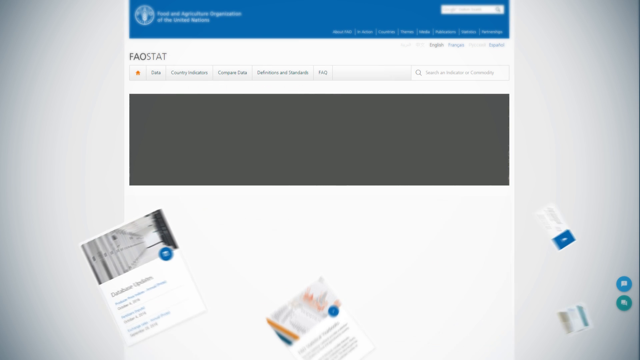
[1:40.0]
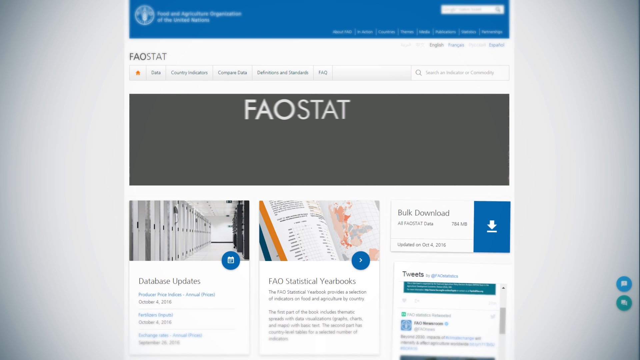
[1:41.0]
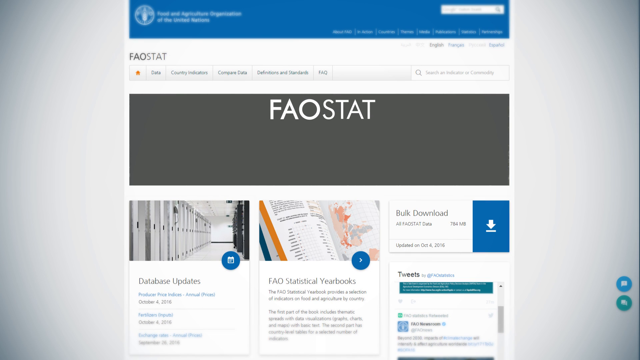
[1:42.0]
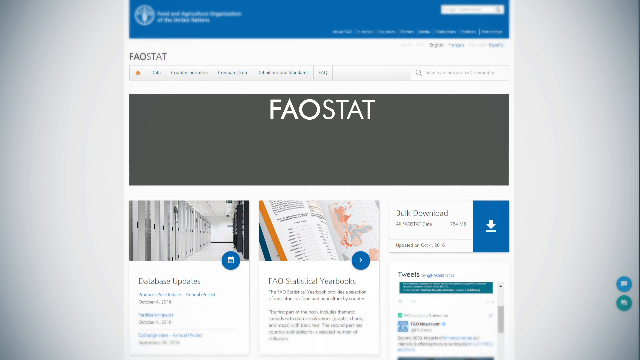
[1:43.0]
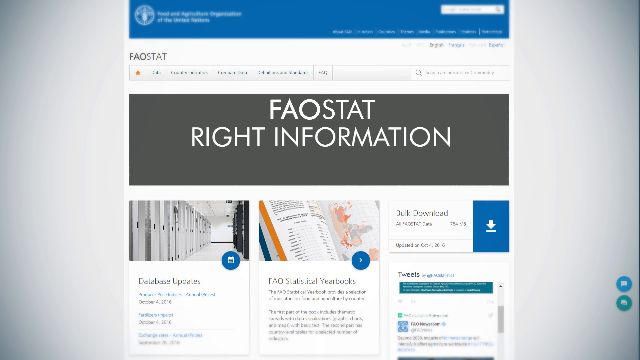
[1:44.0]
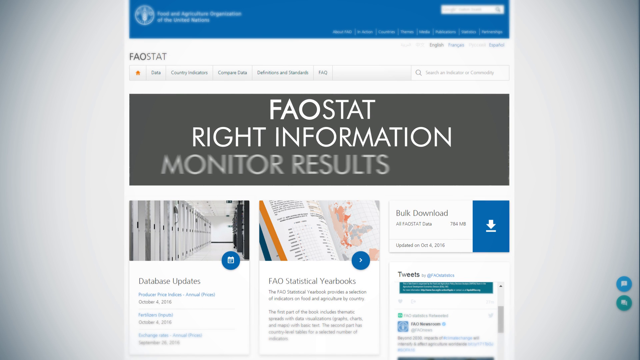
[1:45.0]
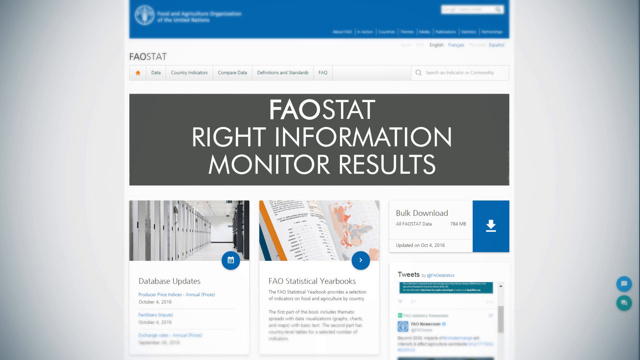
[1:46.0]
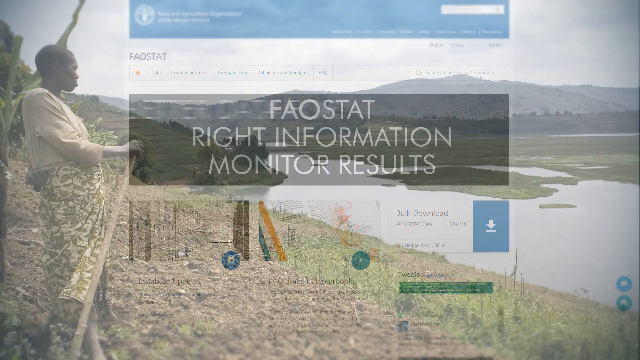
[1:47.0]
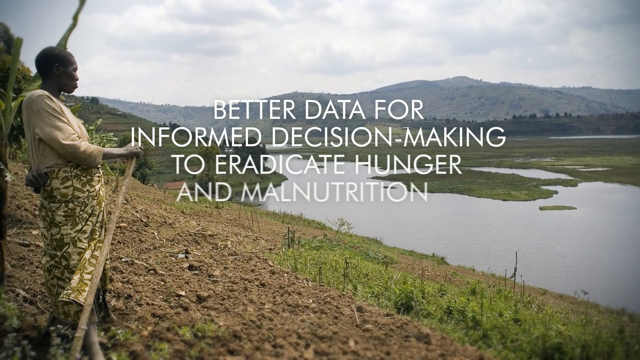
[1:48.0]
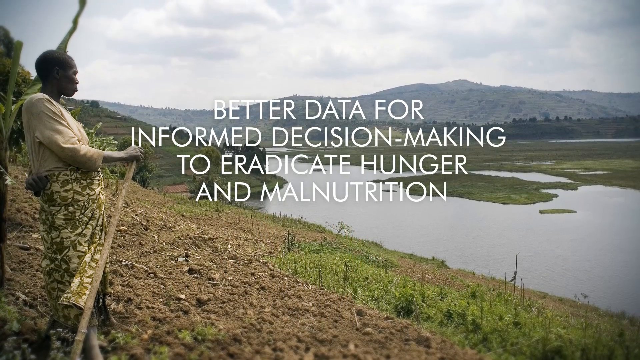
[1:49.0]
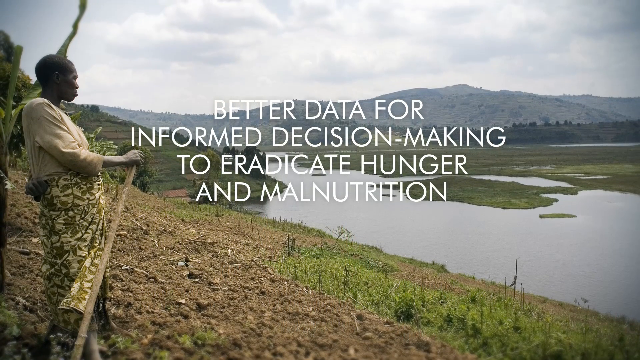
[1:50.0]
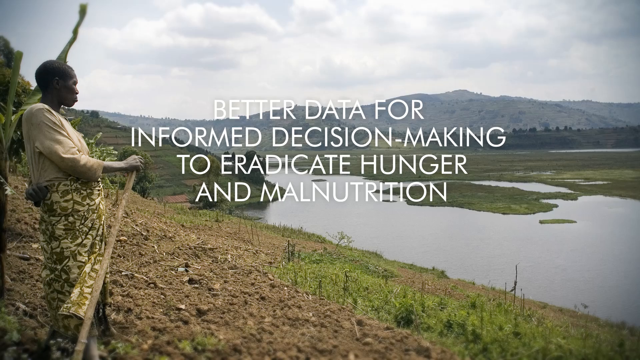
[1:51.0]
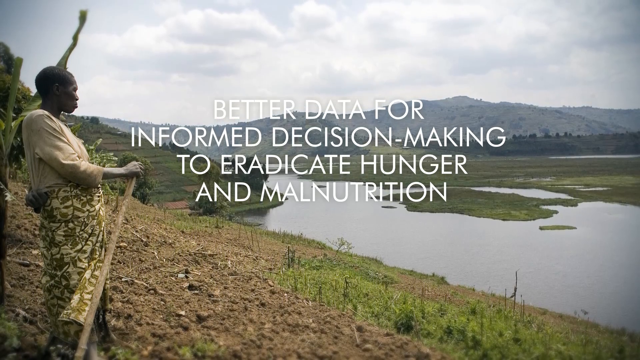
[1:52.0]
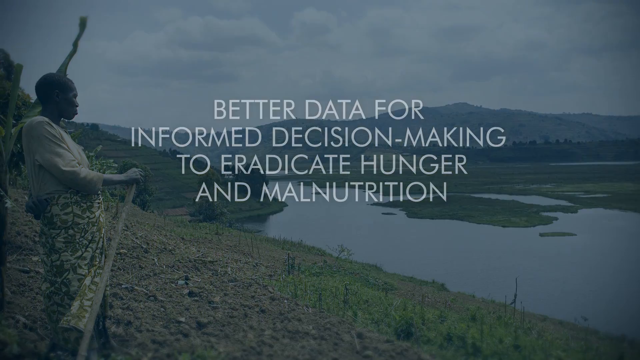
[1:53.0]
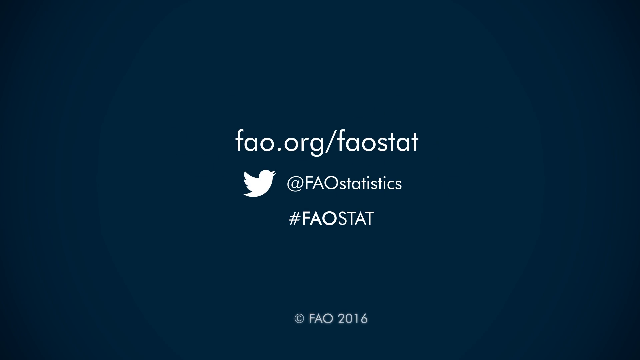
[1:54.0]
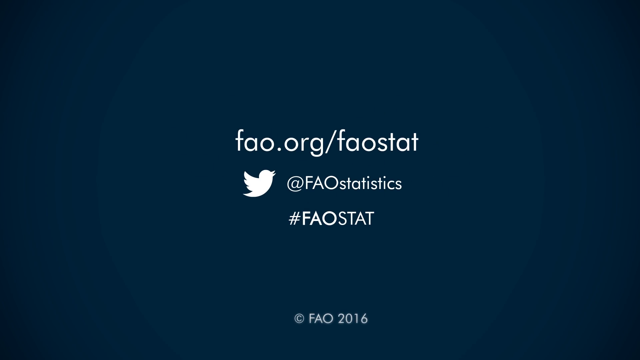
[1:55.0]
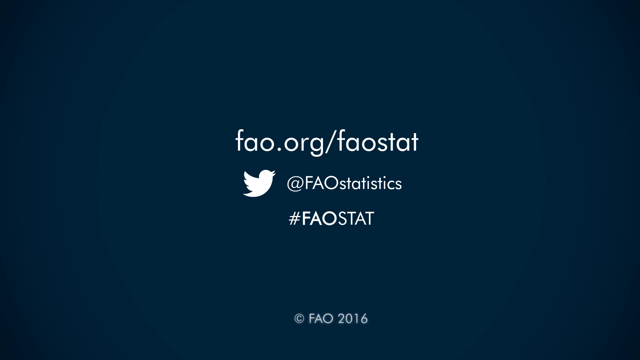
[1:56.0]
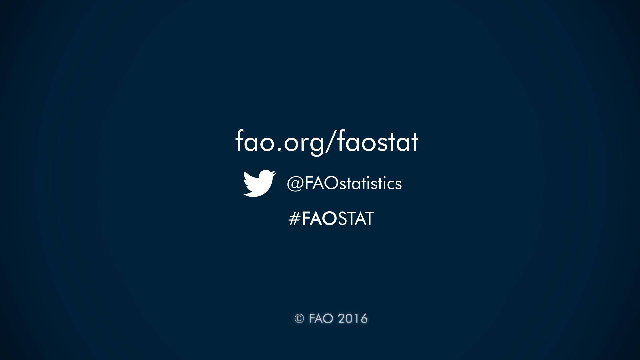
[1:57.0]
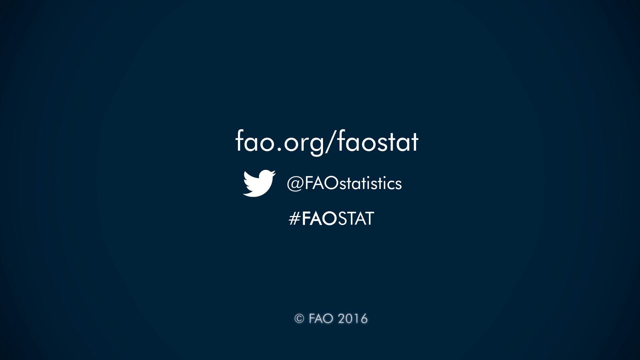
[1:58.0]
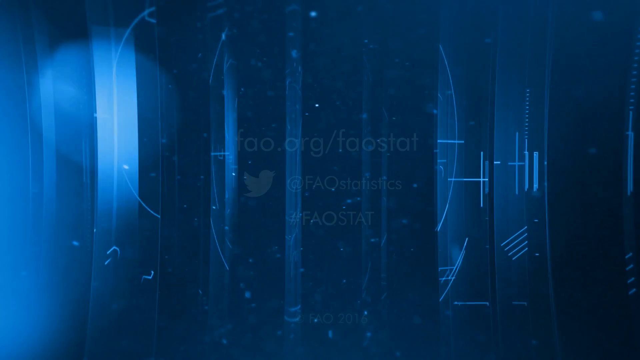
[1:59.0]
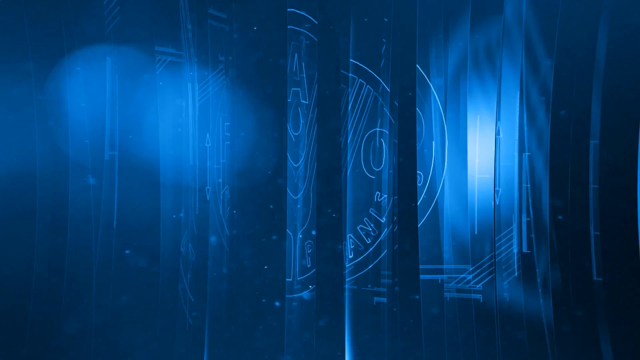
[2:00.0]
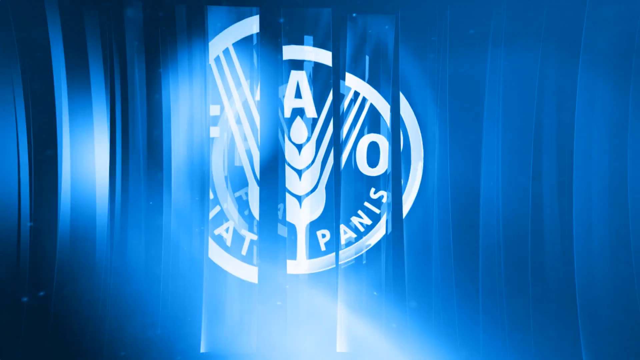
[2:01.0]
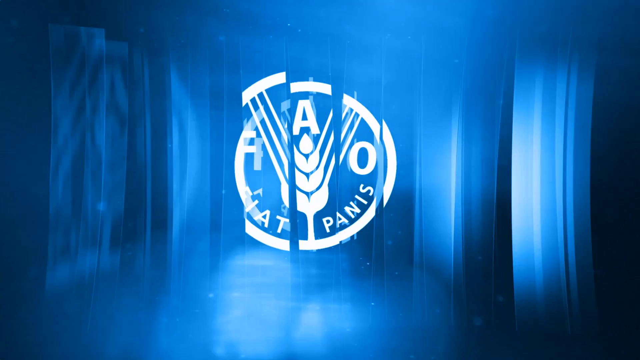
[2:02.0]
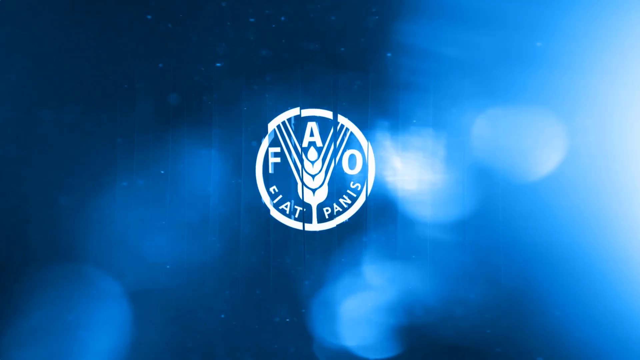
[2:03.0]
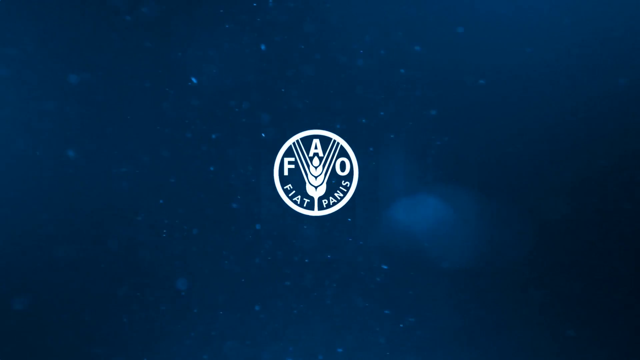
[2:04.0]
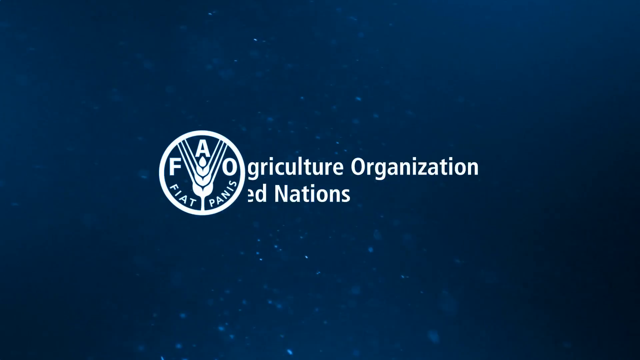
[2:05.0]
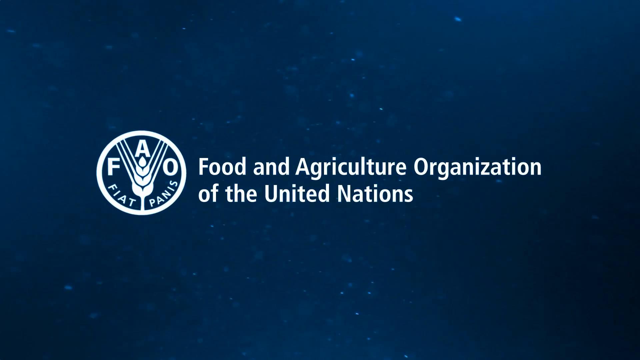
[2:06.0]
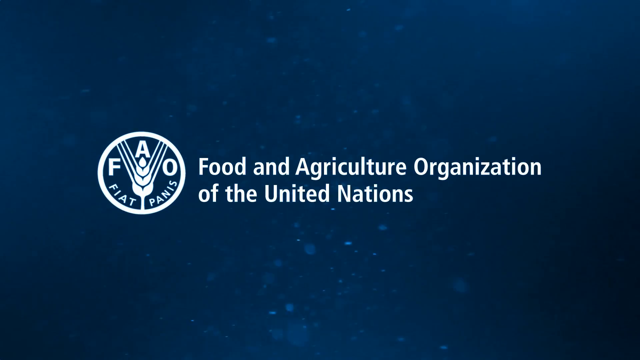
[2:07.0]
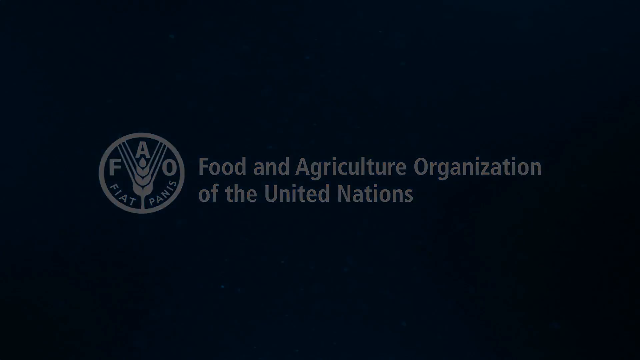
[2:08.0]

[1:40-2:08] The FAO symbol appears with "Food and Agriculture Organization of the United Nations" and "FAOSTAT," along with "Right information" and "monitor results." A dark-skinned African woman is standing near a lake, with a mountain in the background and lush land surrounding the lake, while the words "Better data for informed decision-making to eradicate hunger and malnutrition" appear in the center of the screen. Then the text "fao.org/faostat" appears, along with the Twitter handle FAOSTATISTICS and "#FAOSTAT."